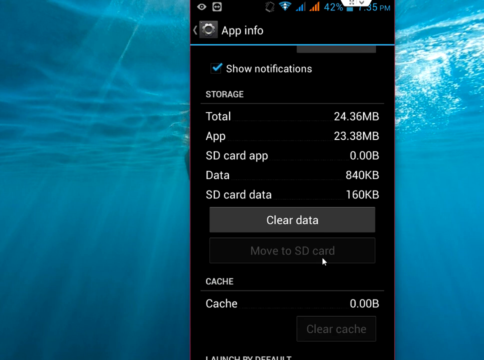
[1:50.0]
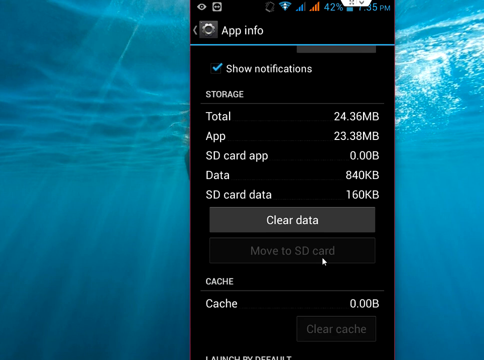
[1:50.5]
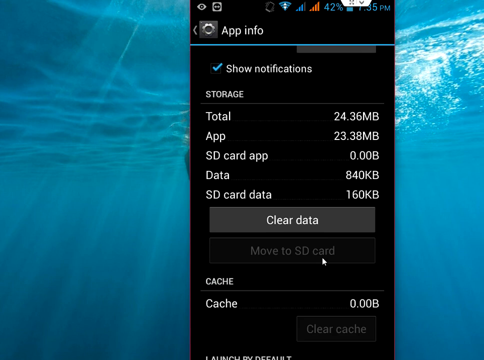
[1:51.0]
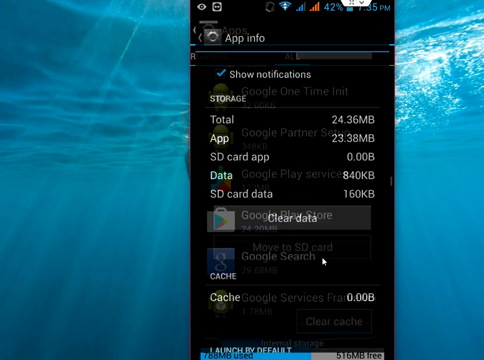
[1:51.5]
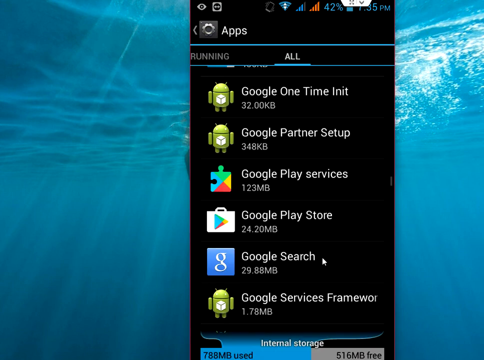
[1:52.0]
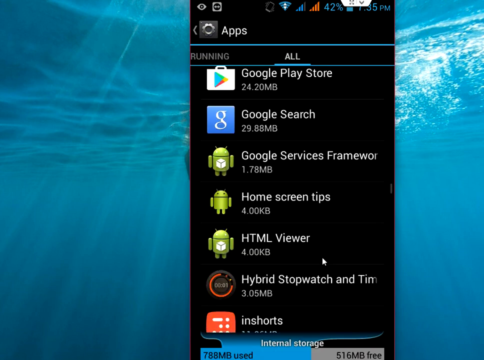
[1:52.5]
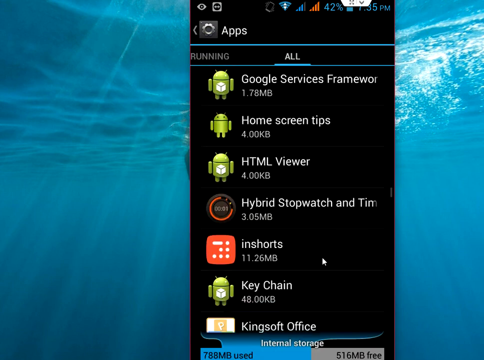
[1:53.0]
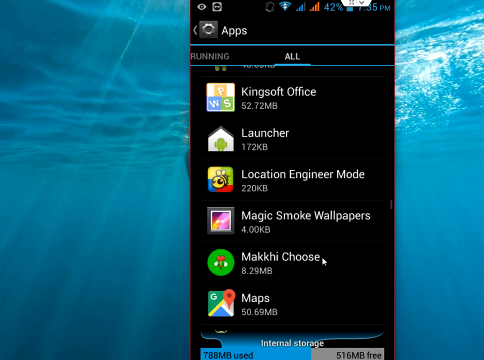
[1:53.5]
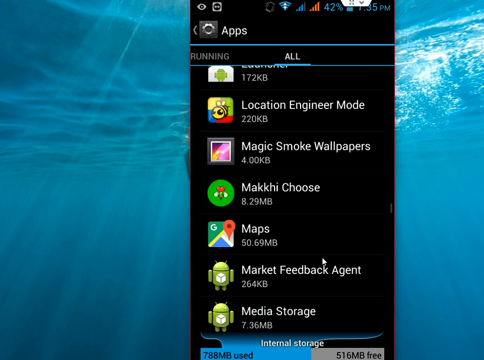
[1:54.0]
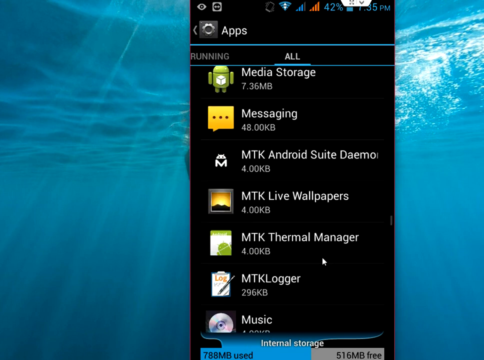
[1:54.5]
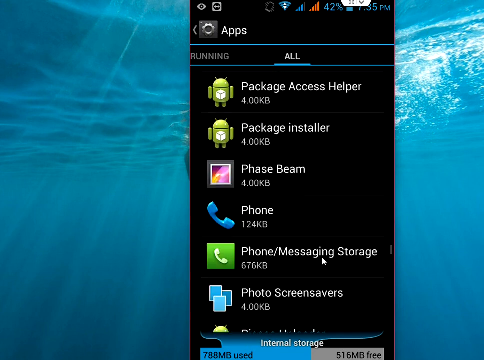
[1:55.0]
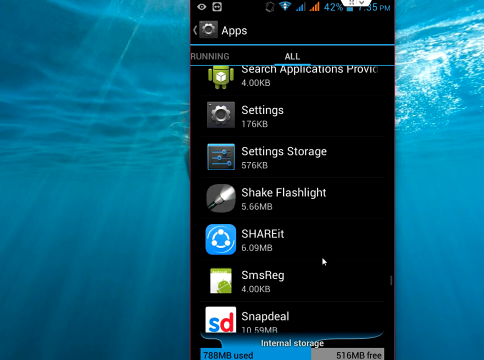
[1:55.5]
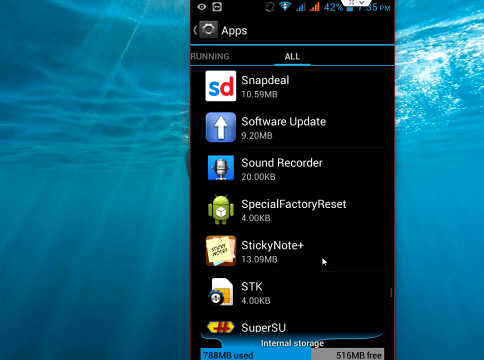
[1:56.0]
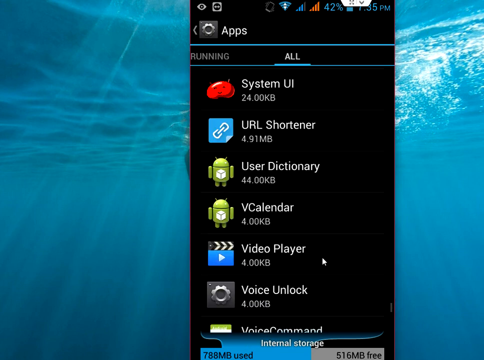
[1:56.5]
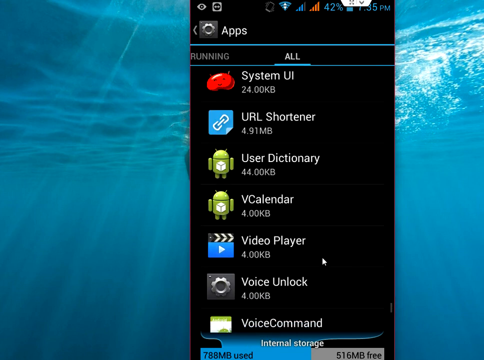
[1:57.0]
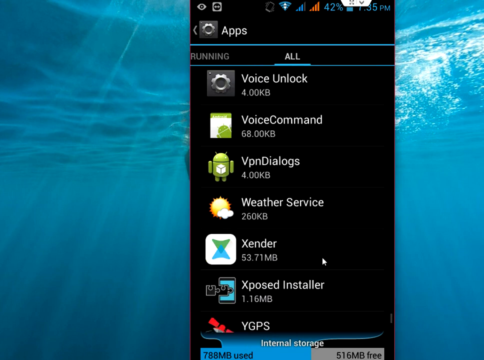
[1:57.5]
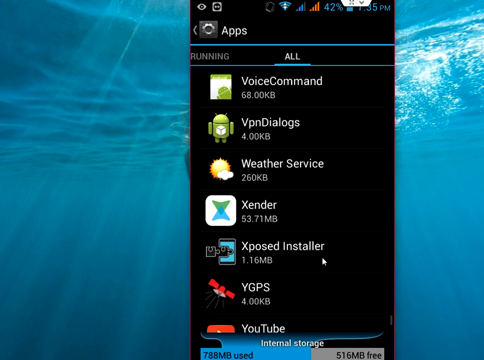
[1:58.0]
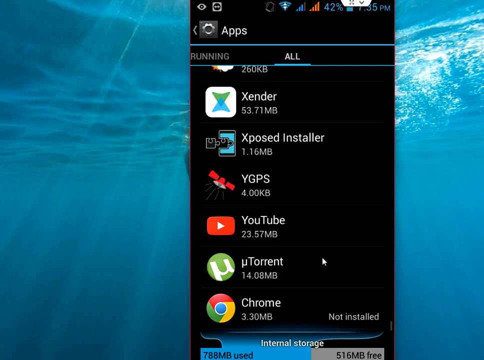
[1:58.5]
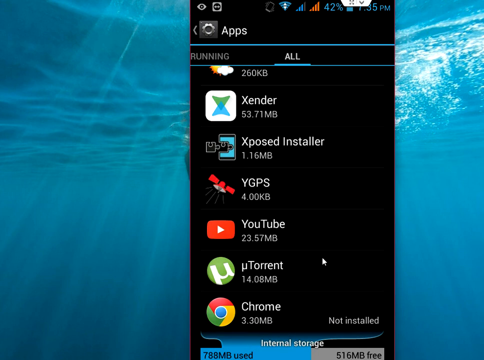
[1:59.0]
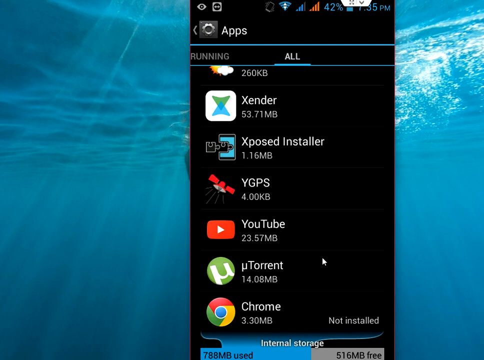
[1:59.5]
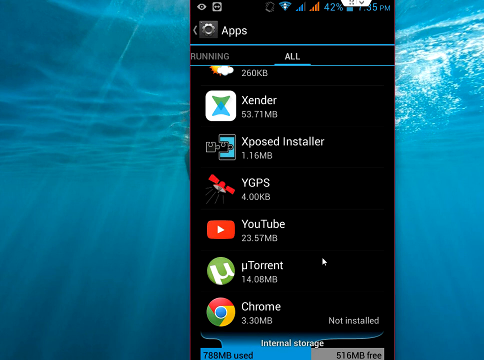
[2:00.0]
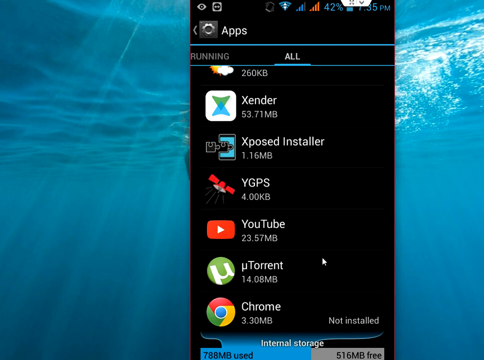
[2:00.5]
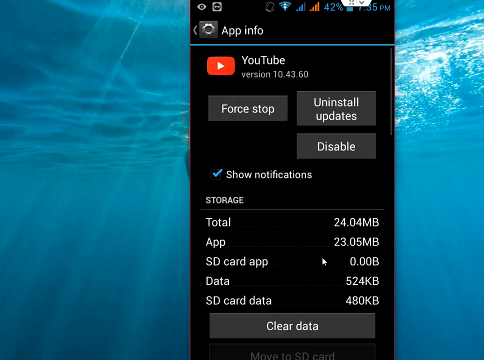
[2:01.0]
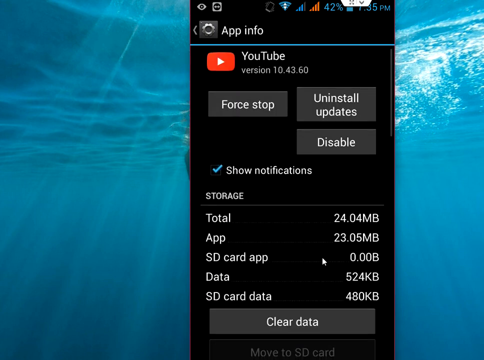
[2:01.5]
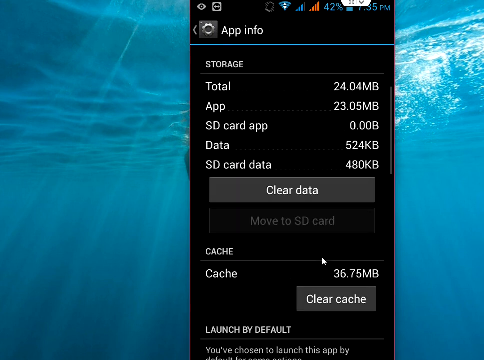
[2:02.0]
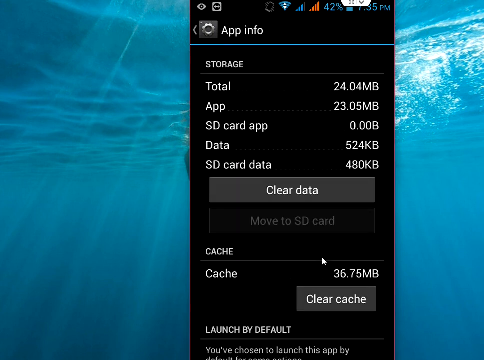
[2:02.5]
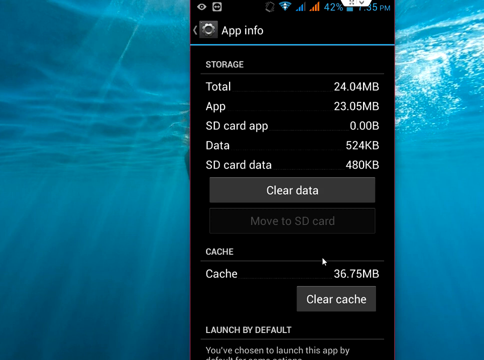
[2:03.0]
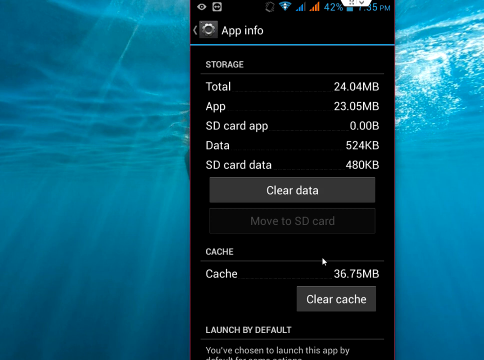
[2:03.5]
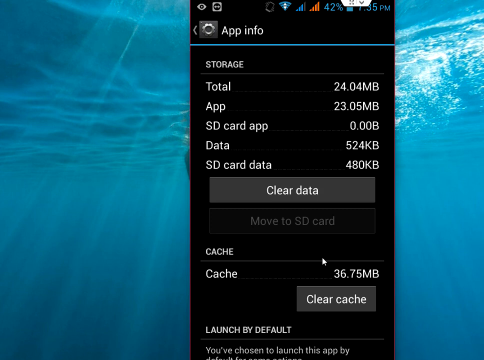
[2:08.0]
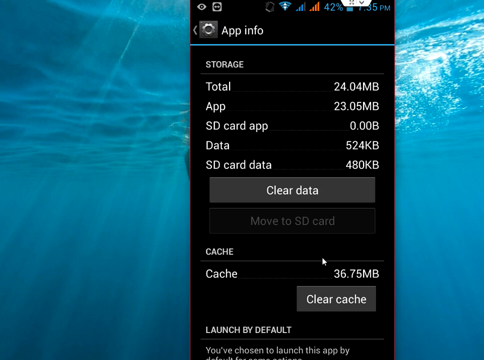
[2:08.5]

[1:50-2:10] The user scrolls very quickly down through the G's, the H's, the L's and all the way to the Y's, keeping the first row static, and clicks on YouTube. In its storage info area are a Clear Data button, a Move to SD Card button and a Clear Cache button. The user scrolls down in that area, and the cursor looks like it is getting ready to press the Clear Cache button.